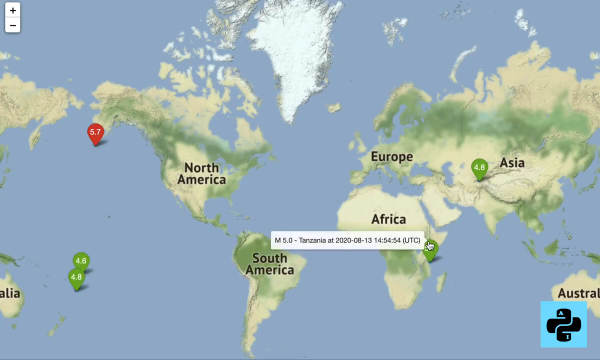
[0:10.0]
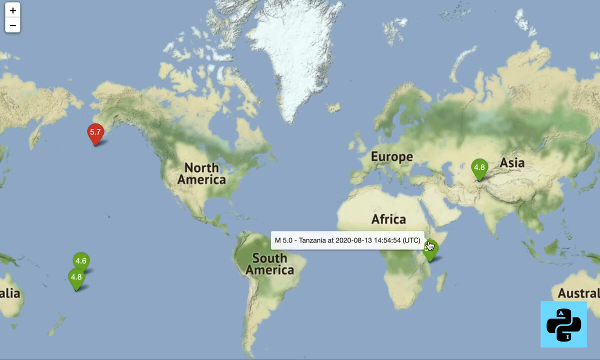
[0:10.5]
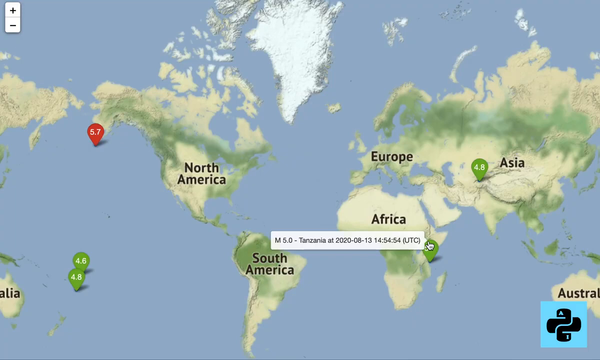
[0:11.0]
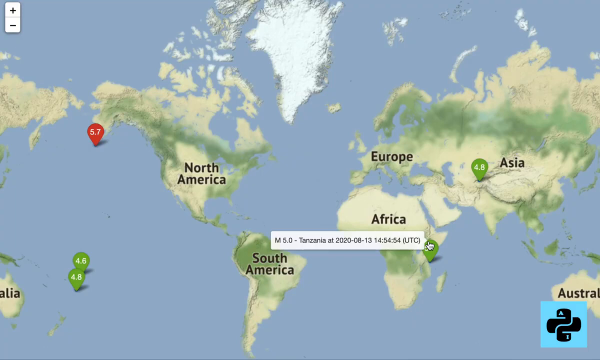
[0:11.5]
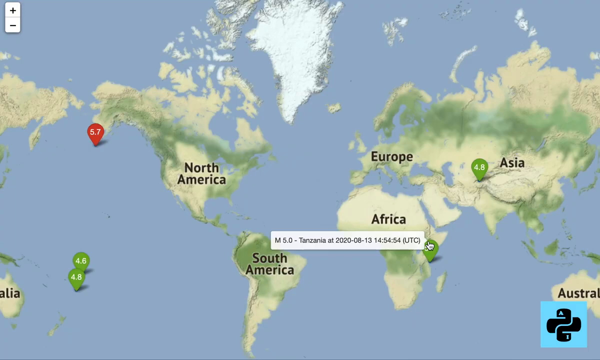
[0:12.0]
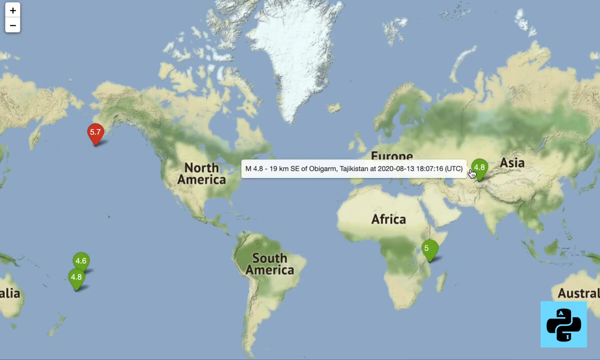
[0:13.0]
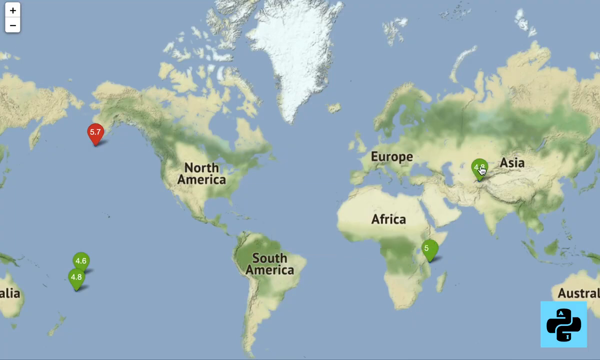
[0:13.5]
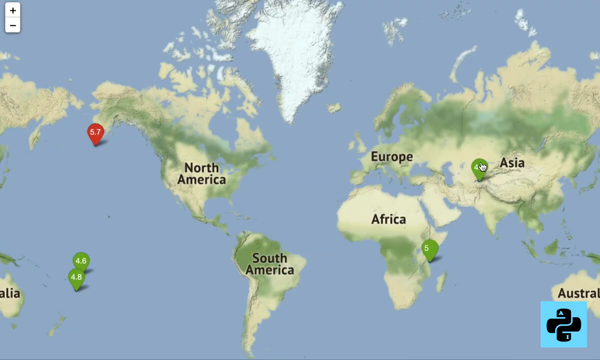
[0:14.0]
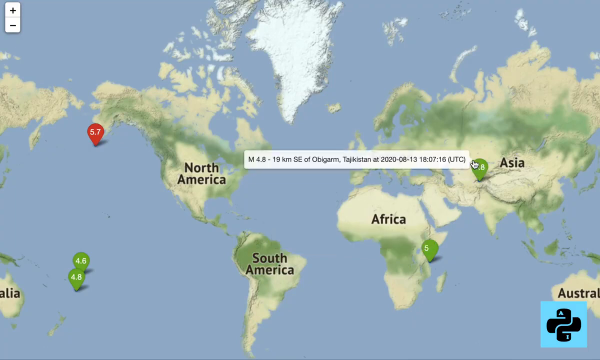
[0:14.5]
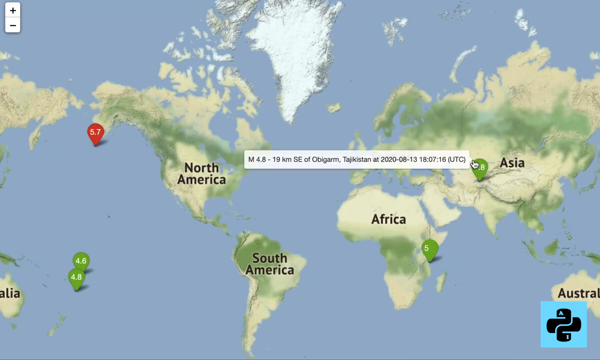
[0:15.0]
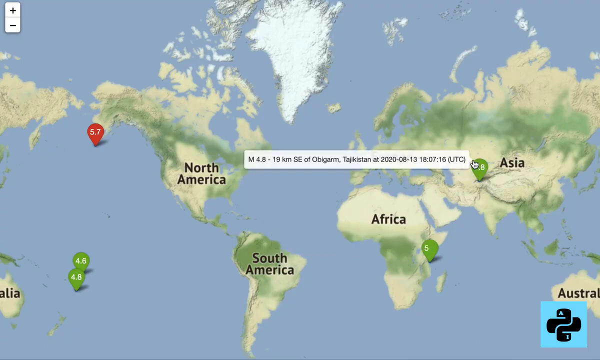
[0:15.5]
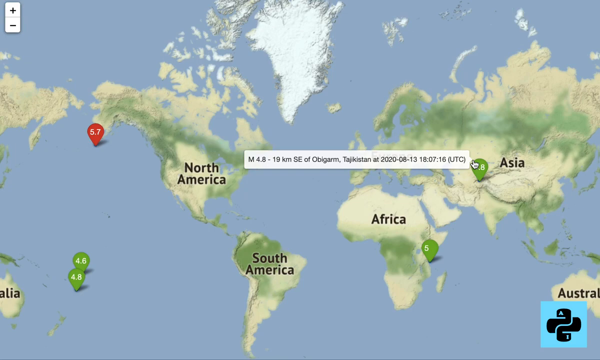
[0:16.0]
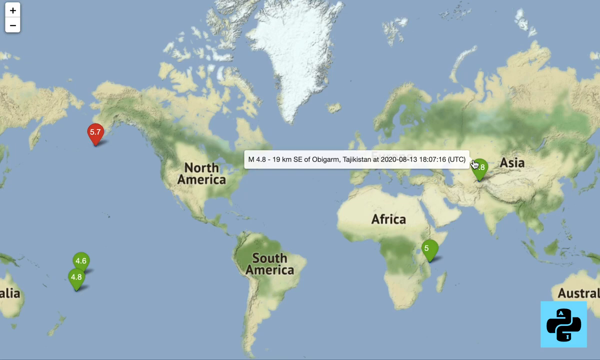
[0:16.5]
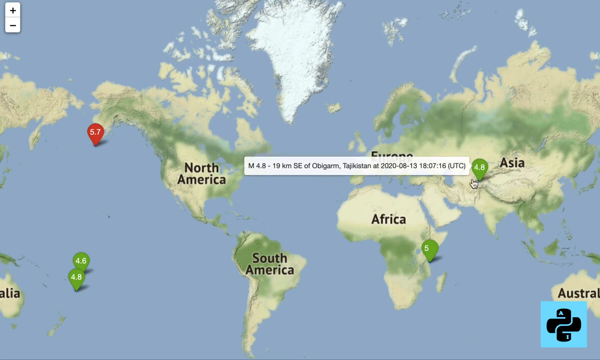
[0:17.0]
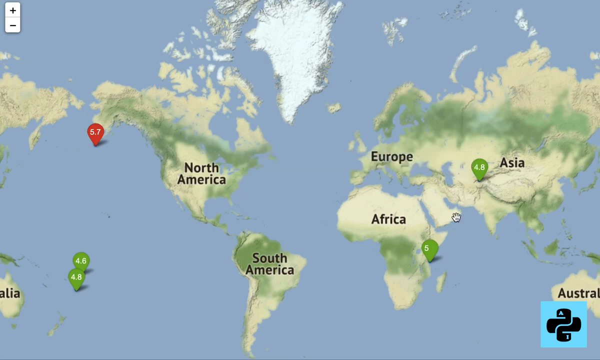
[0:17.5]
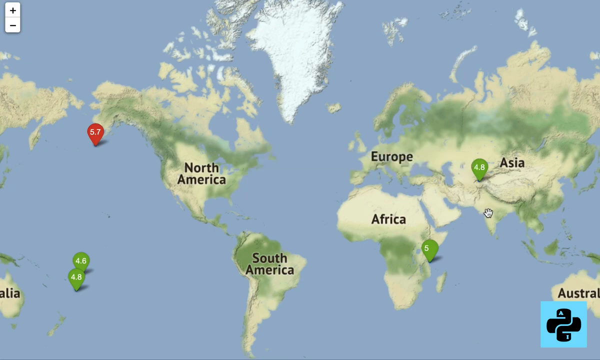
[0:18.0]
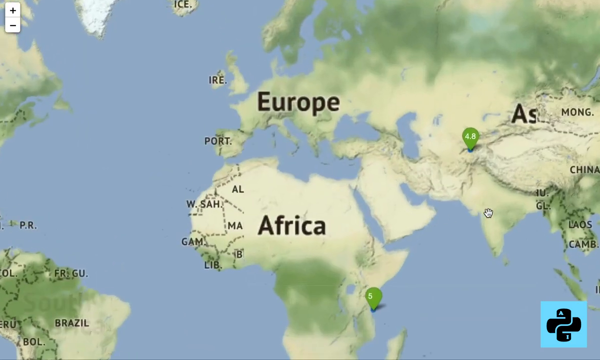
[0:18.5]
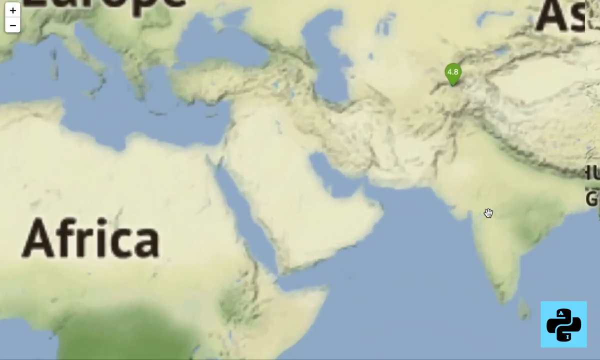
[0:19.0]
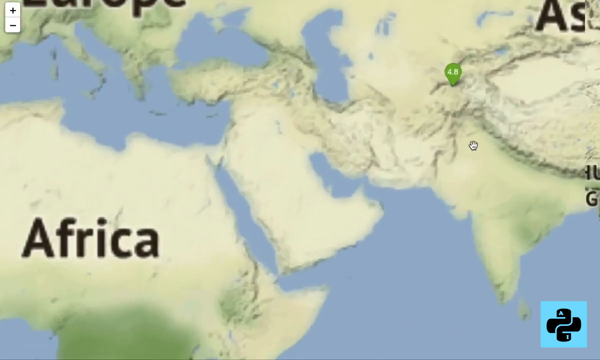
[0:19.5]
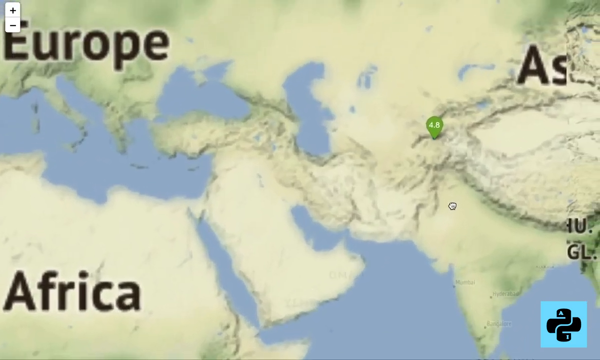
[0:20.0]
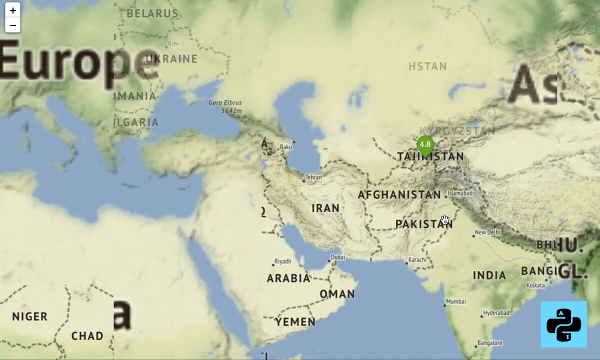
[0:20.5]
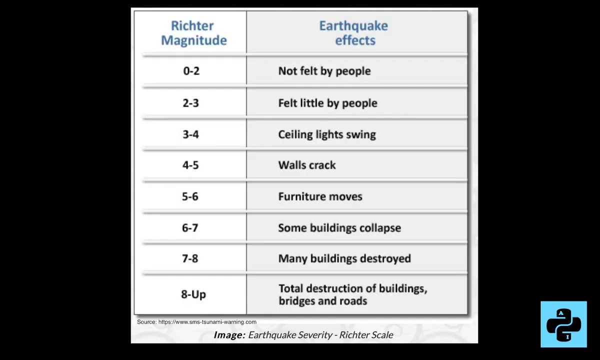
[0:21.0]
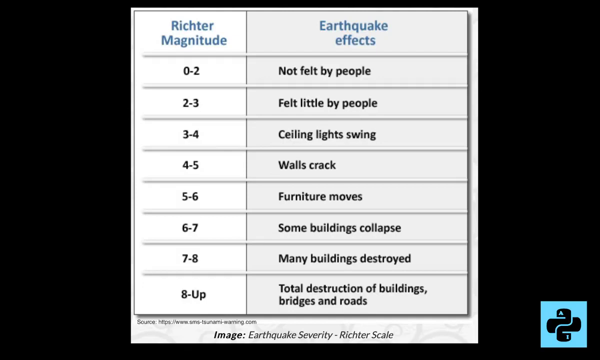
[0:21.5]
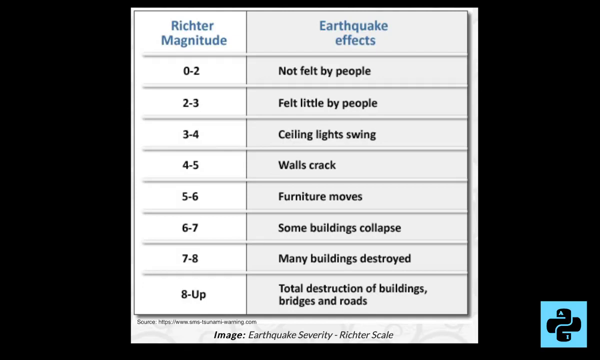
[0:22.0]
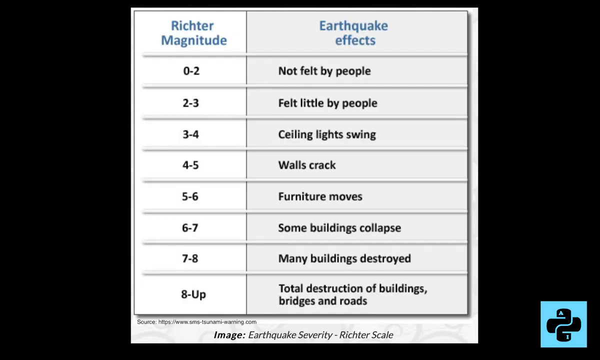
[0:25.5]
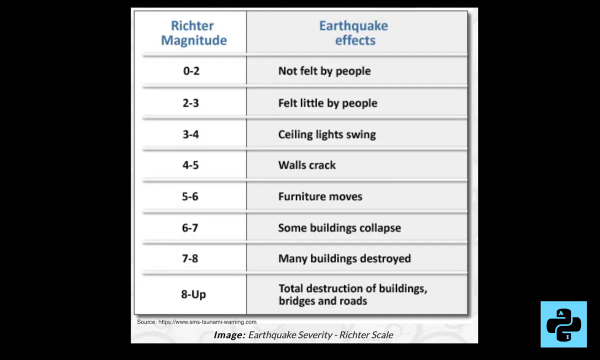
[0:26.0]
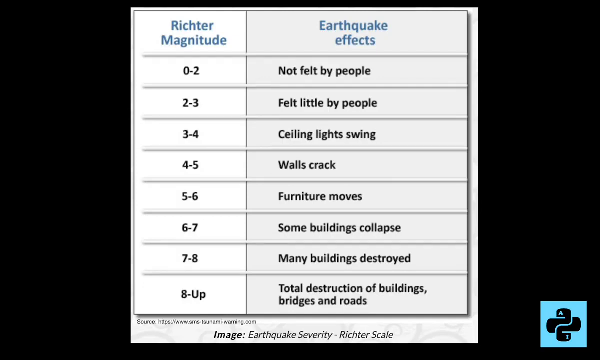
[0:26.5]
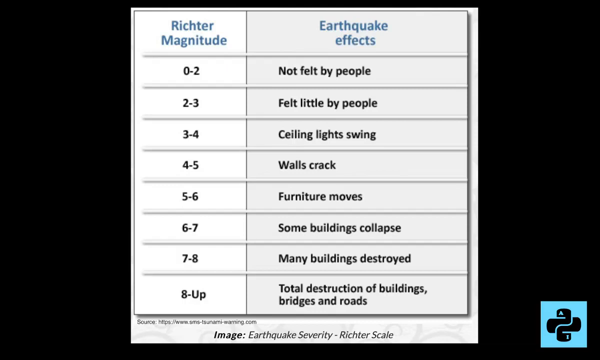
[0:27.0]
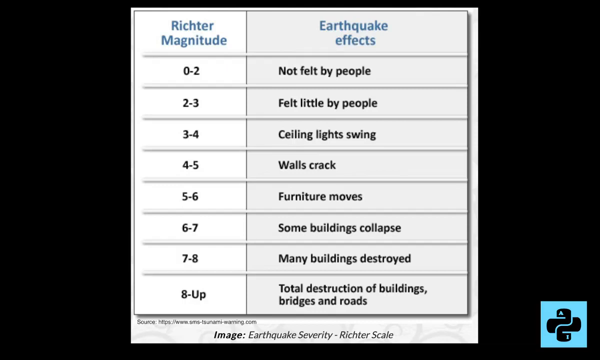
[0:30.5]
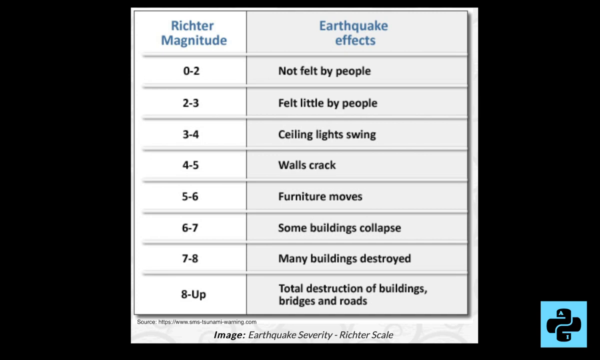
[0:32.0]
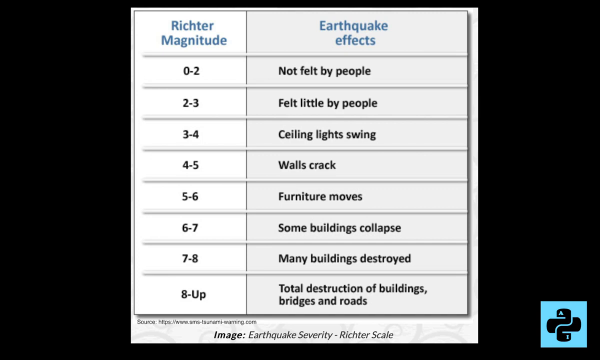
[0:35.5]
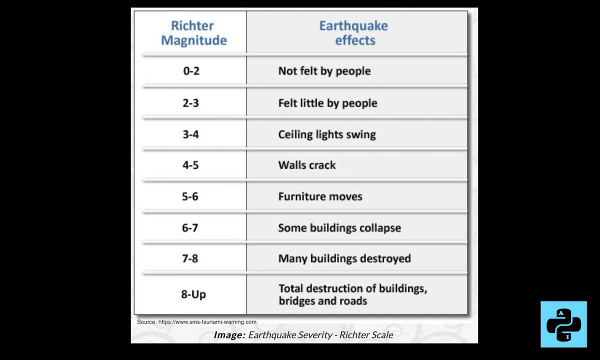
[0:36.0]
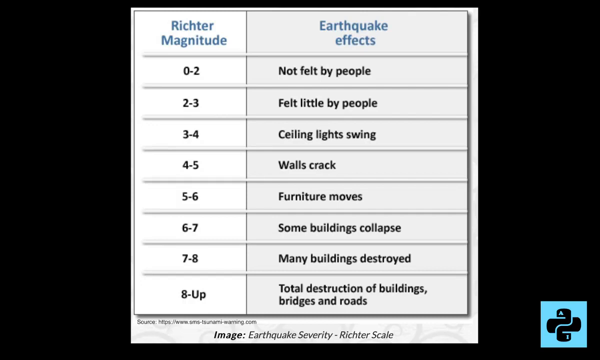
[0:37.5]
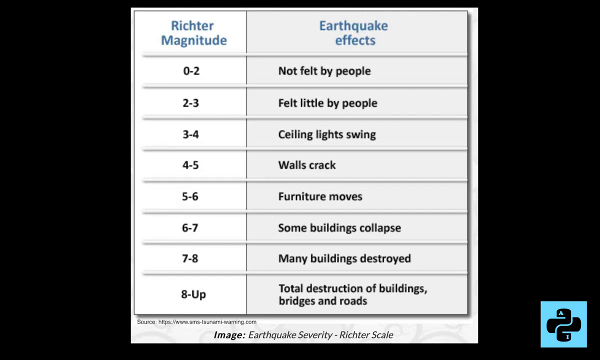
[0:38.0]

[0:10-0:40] A flat digital map shows the continents North America, South America, Africa, Europe, Asia and Australia. Several markings are on the map: four in green and one in red. The red one, numbered 5.7, is just below Alaska. Two green markings are in the ocean just east of Australia, reading 4.6 and 4.8. Another green marking on the eastern coast of Africa shows a five, with the second number unclear, and one in Asia, in Tajikistan, reads 4.8. Next, a table appears, titled "earthquake effects" and "Richter magnitude" in blue text against a white backdrop. Its rows read: 0 to 2, "not felt by people"; 2 to 3, "felt little by people"; 3 to 4, "ceiling lights swing"; 4 to 5, "walls crack"; 5 to 6, "furniture moves"; 6 to 7, "some buildings collapse"; 7 to 8, "many buildings collapse"; 8 and up, "total destruction of buildings, roads, and bridges". The table is set against a black backdrop.